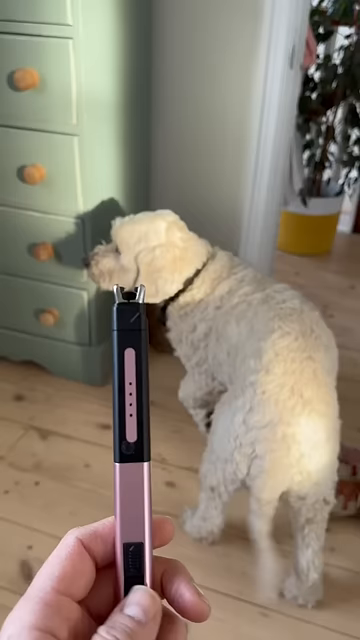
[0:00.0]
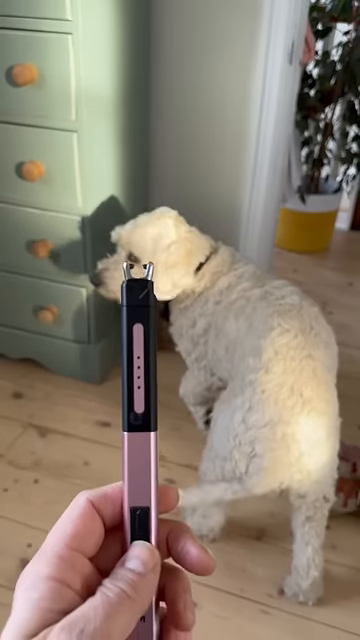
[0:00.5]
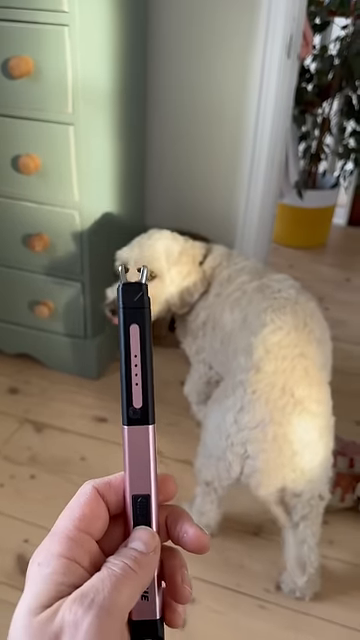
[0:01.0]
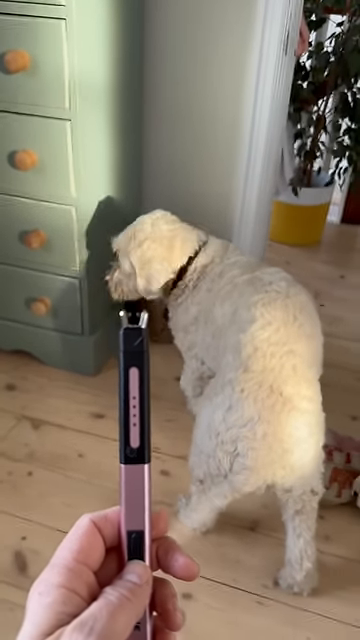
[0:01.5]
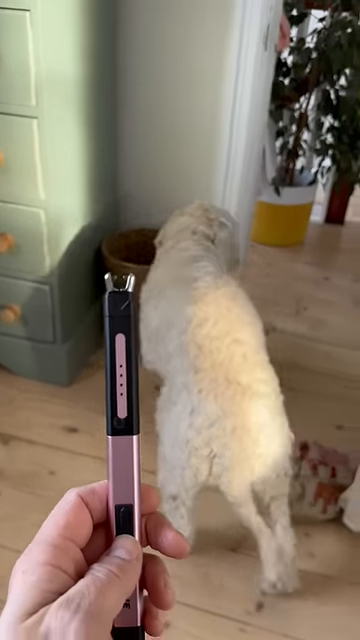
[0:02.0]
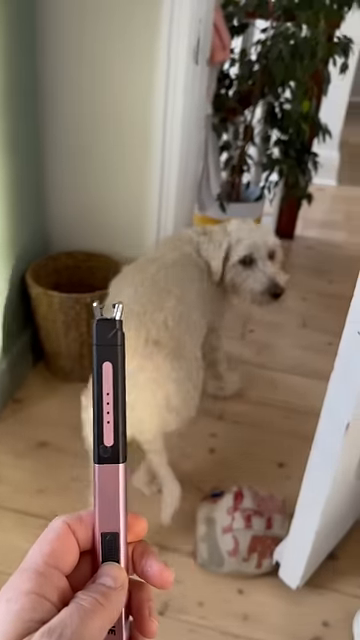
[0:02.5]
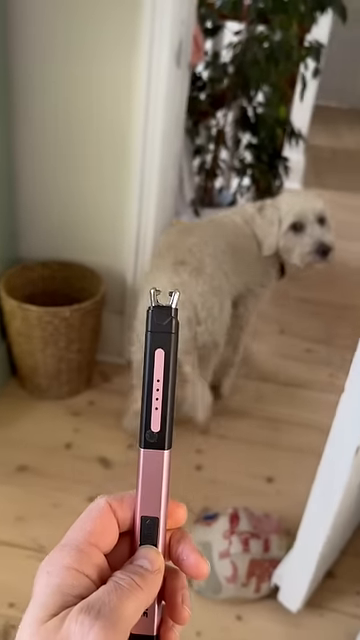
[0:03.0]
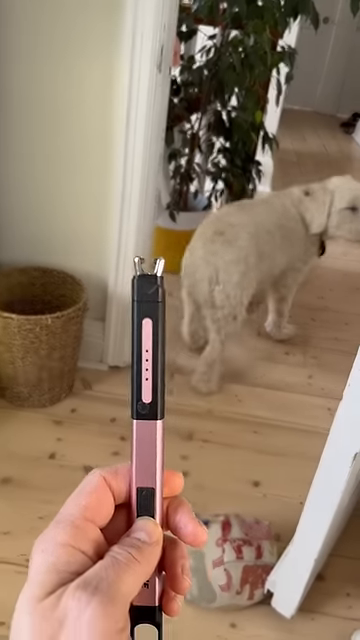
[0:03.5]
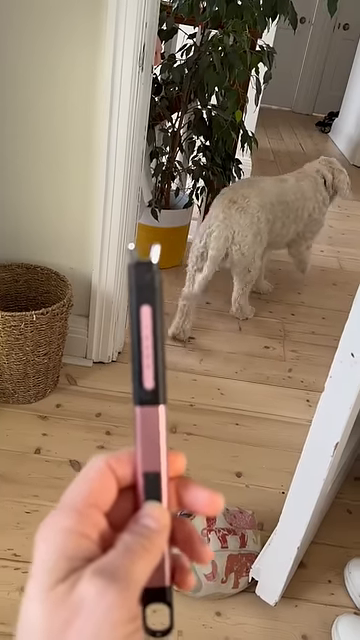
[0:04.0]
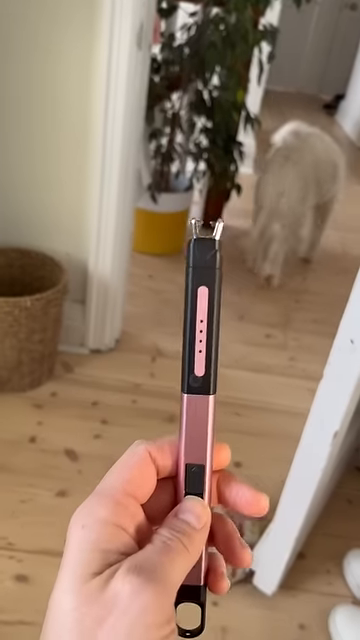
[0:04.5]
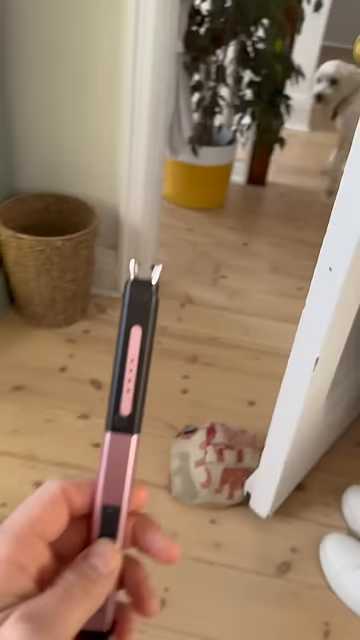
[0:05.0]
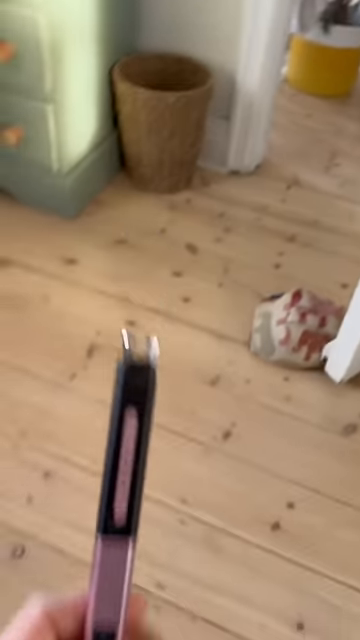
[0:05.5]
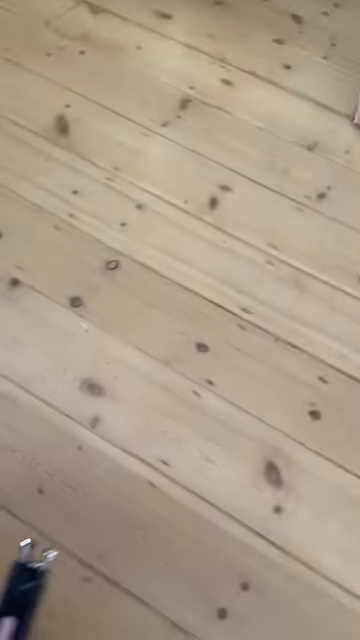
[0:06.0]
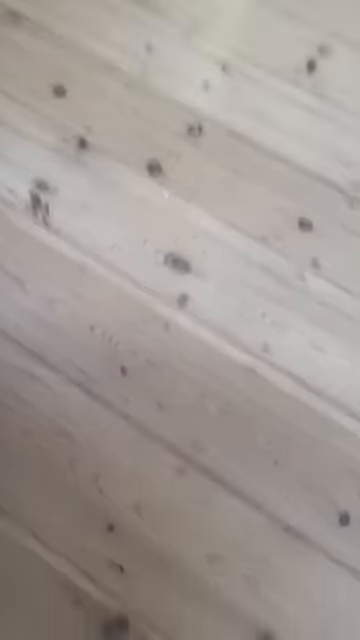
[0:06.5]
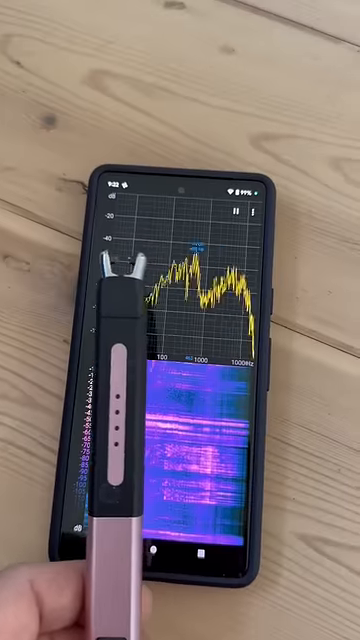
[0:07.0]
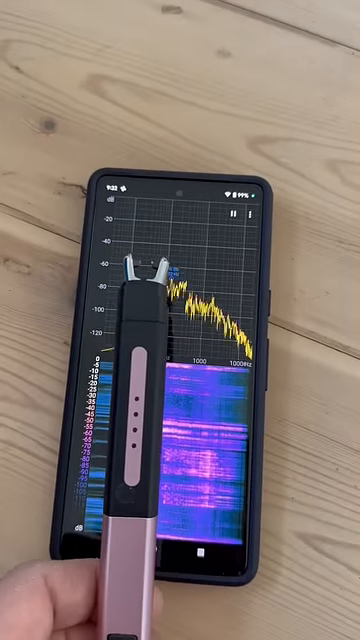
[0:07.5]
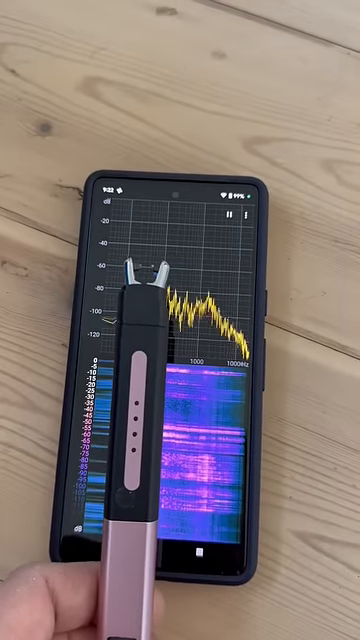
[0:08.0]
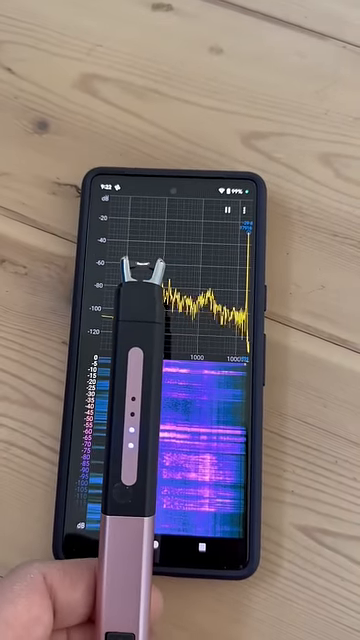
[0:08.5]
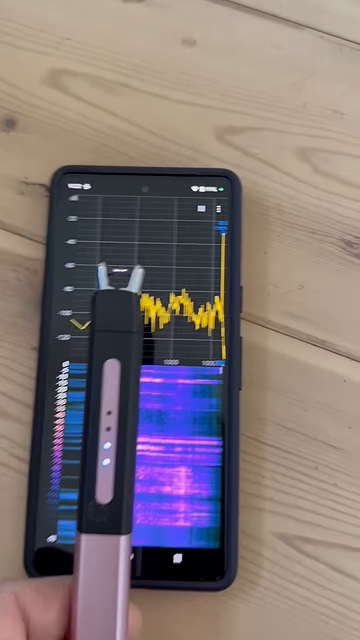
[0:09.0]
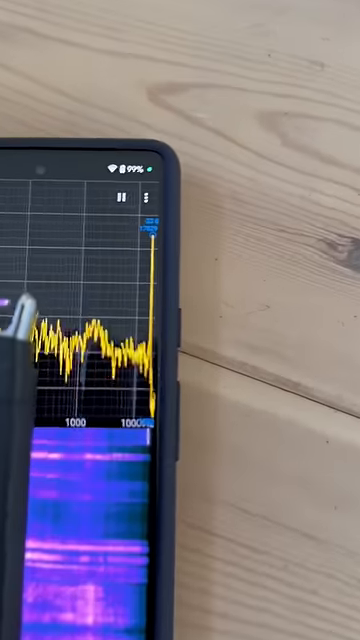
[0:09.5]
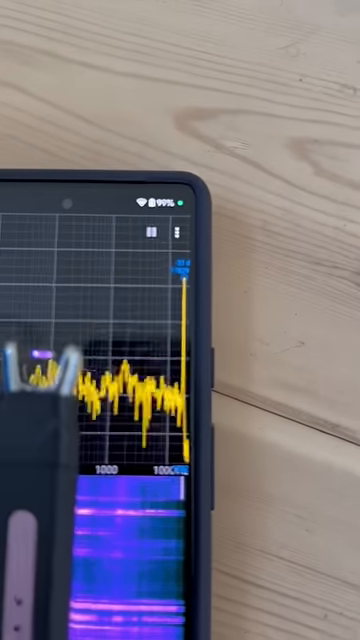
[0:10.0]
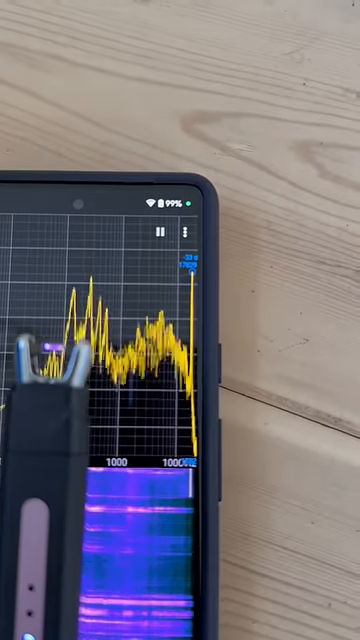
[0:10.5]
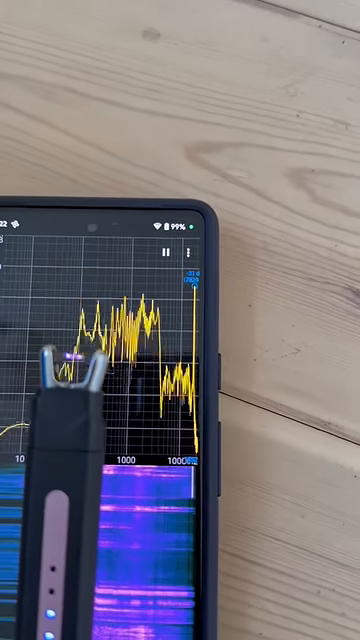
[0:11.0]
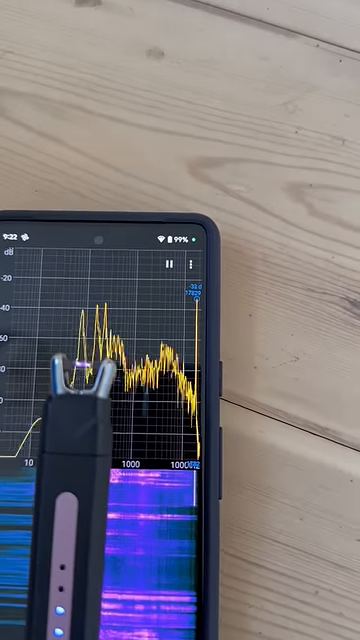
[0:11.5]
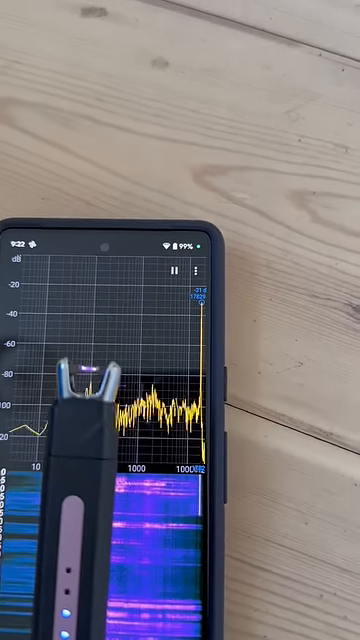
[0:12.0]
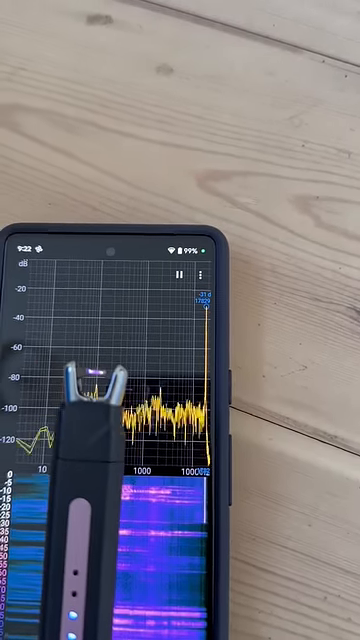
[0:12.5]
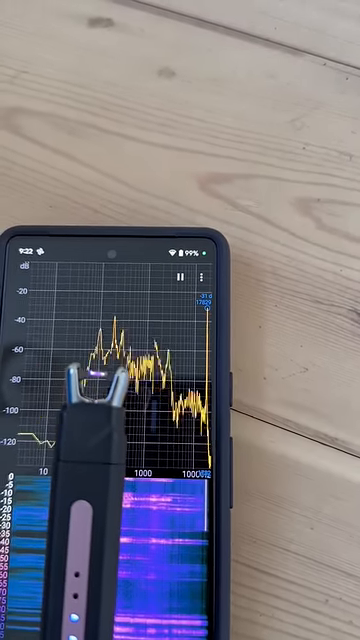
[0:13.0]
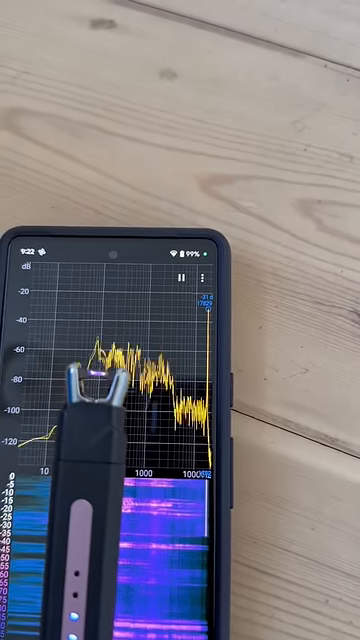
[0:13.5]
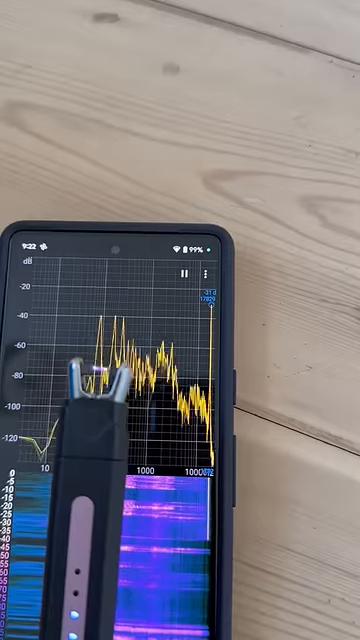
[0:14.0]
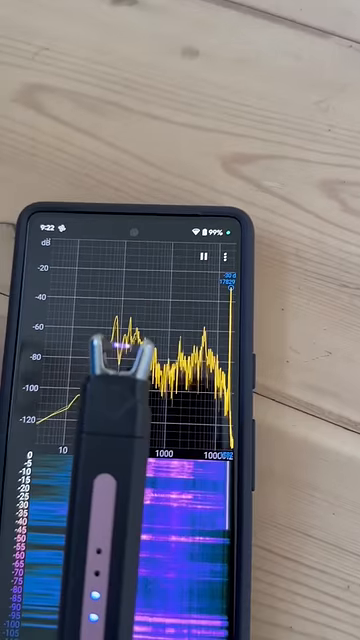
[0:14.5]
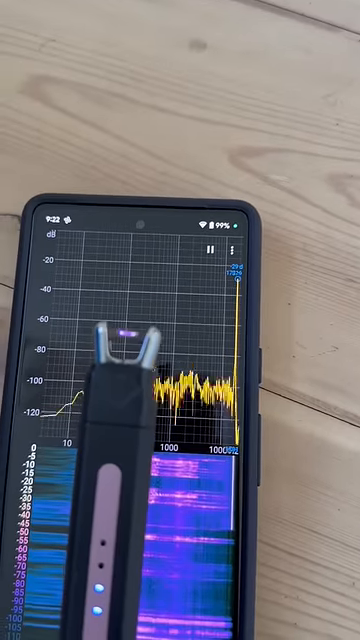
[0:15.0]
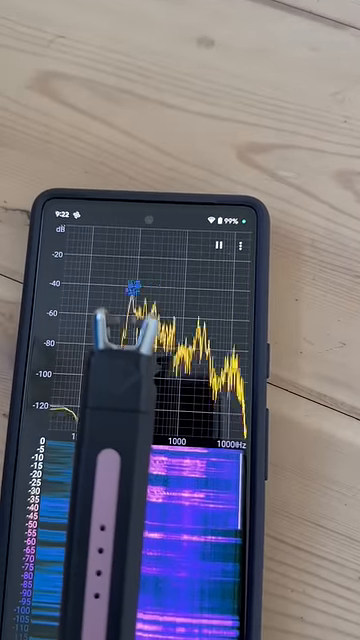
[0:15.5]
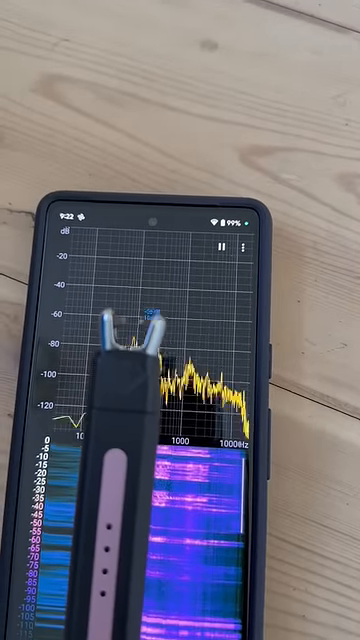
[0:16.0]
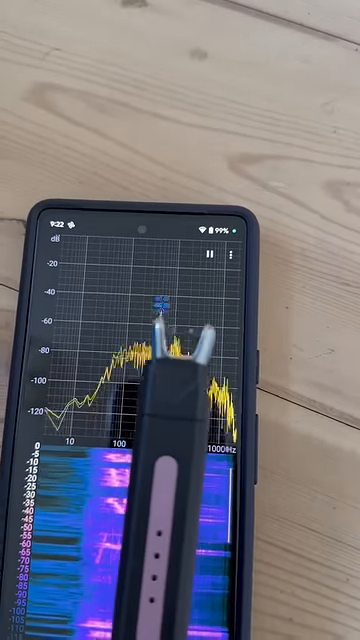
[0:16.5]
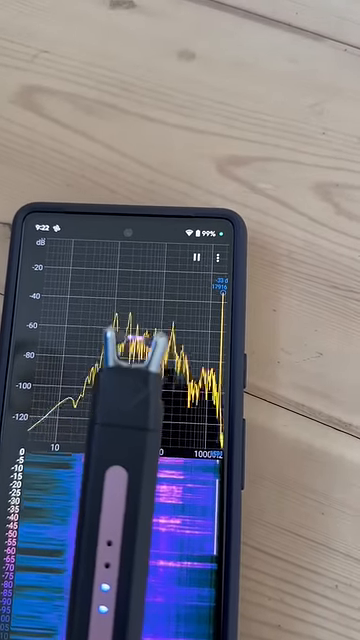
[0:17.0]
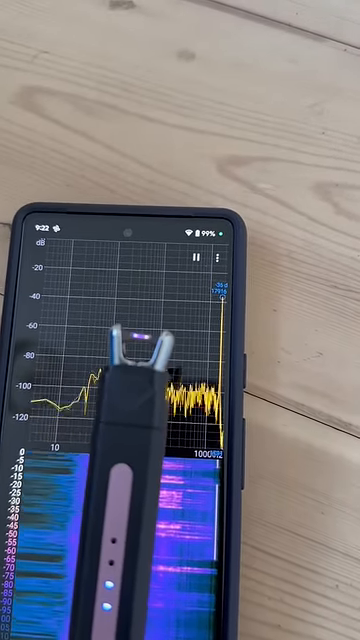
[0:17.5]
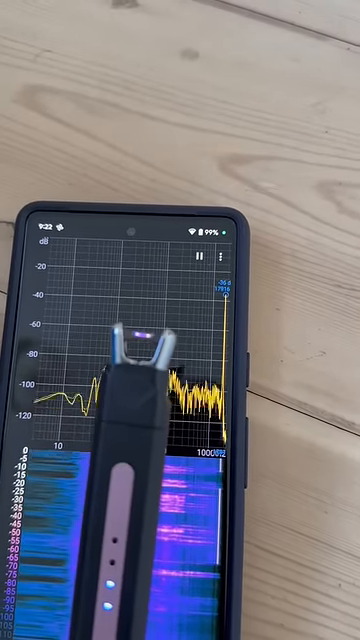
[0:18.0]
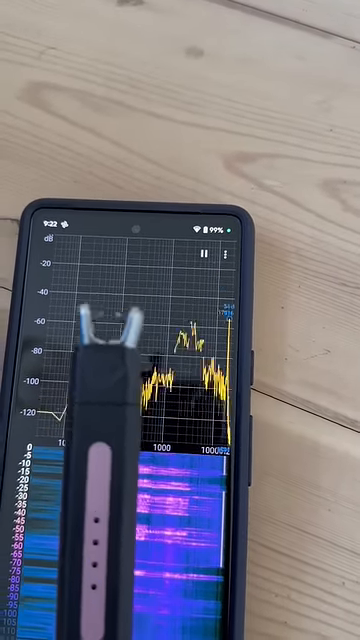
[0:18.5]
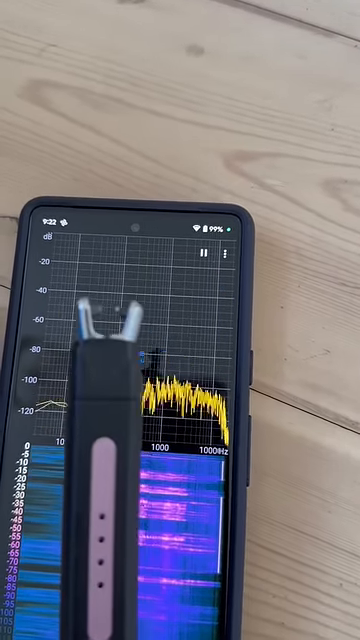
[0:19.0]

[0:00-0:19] The video is filmed from the point of view of someone holding a cell phone, with a device that looks like a silver and black cylindrical pen held in front of the camera; the person's hand comes up from the bottom of the frame holding it. The setting looks like an apartment with wooden floors. A white-furred dog doesn't like the device and, seeming scared of it, walks out of the room through an open door. The video then cuts to the person holding the device up to their cell phone, which is placed on a table, with the shot very close to the device. The cell phone is picking up some sort of readings from the device, showing some sort of x-ray scan/oscilloscope reading that monitors the device, which is probably creating a noise that bothers the dog.